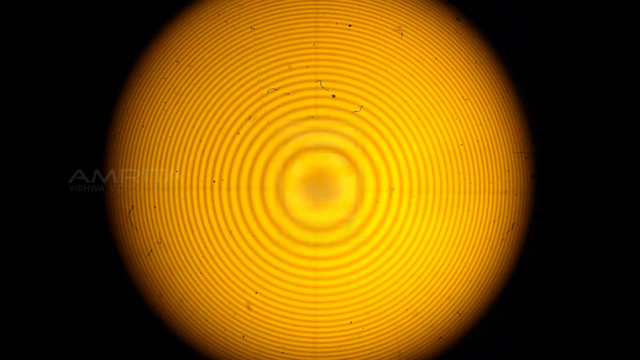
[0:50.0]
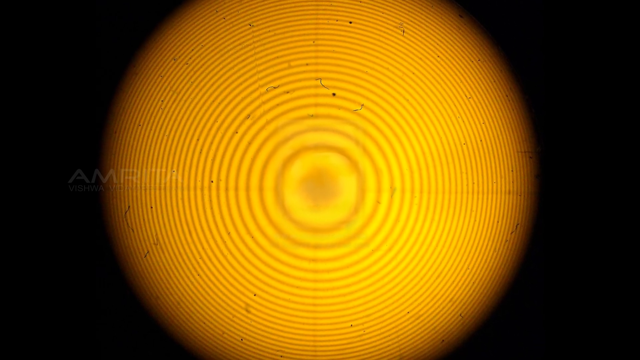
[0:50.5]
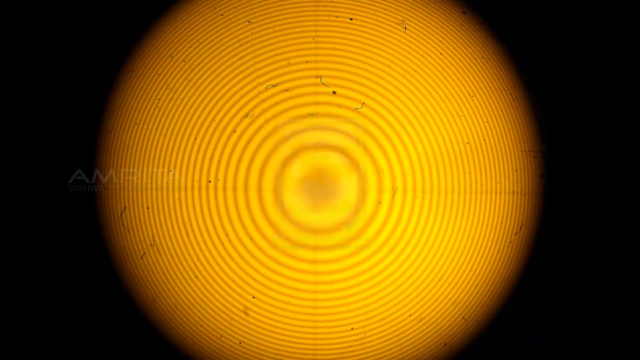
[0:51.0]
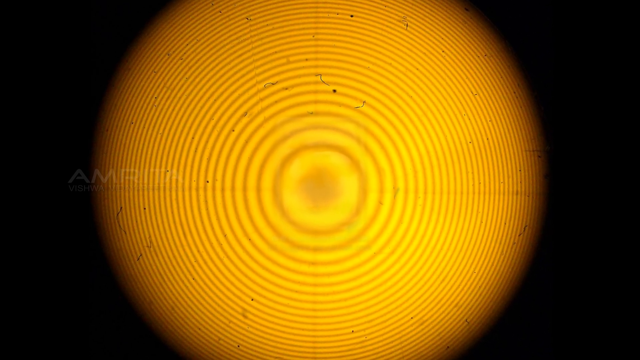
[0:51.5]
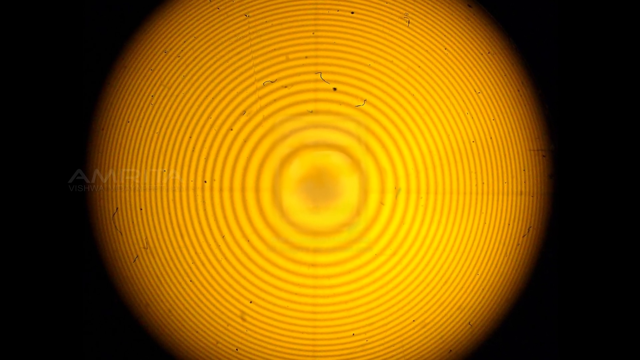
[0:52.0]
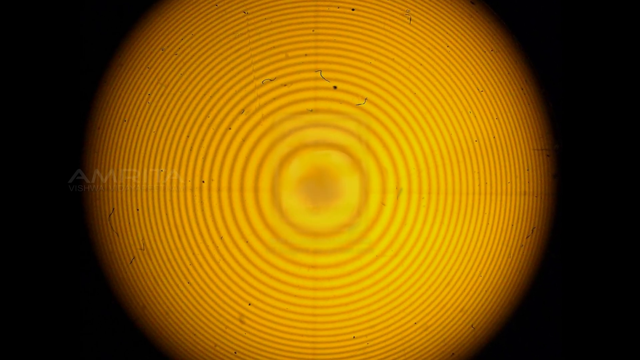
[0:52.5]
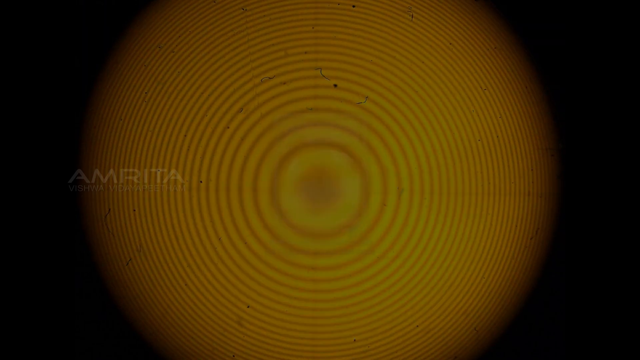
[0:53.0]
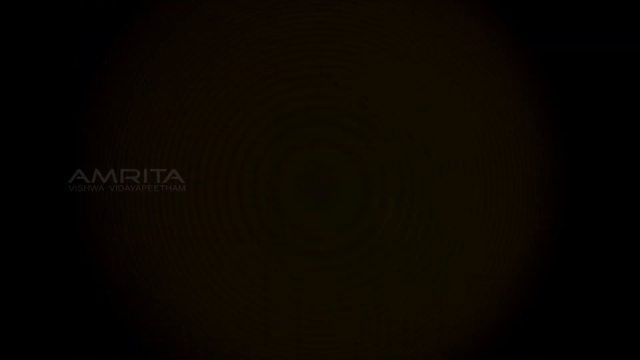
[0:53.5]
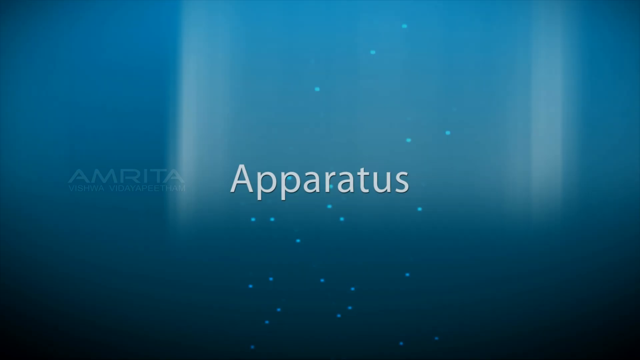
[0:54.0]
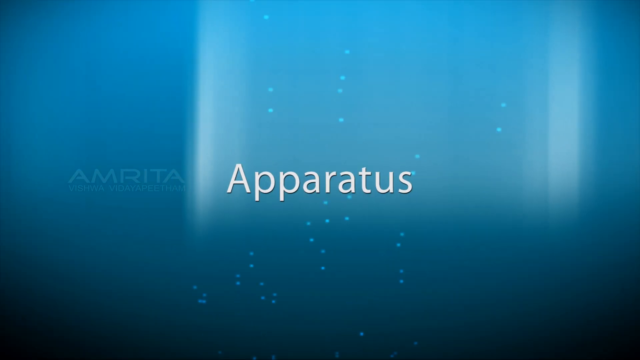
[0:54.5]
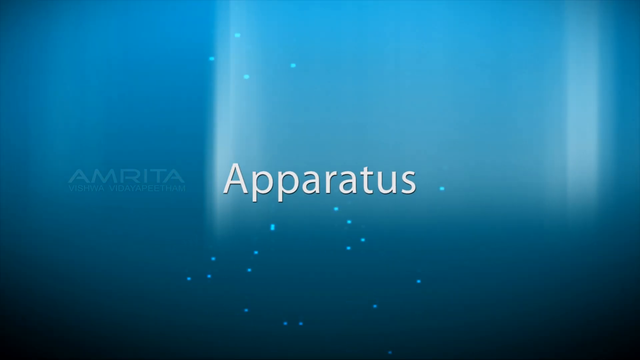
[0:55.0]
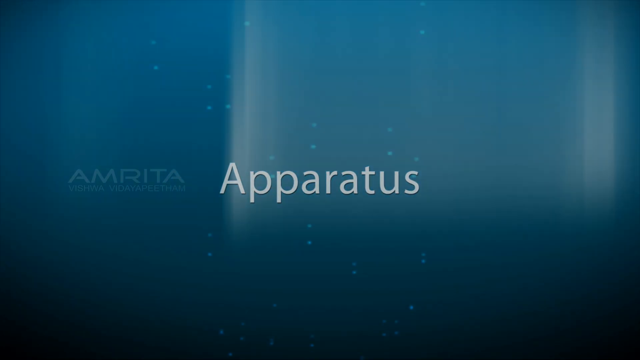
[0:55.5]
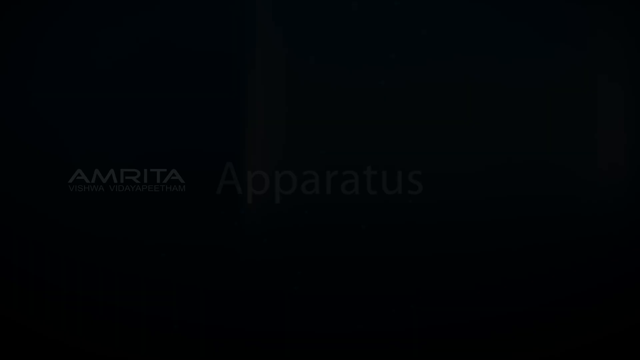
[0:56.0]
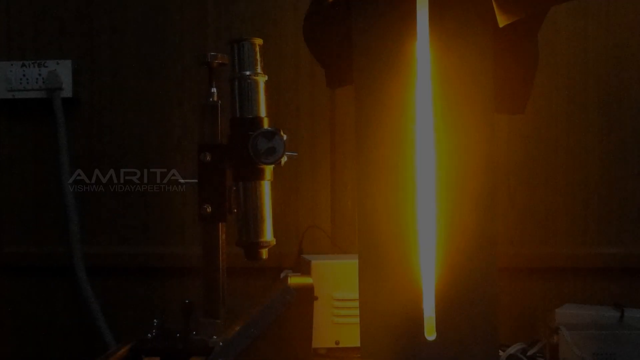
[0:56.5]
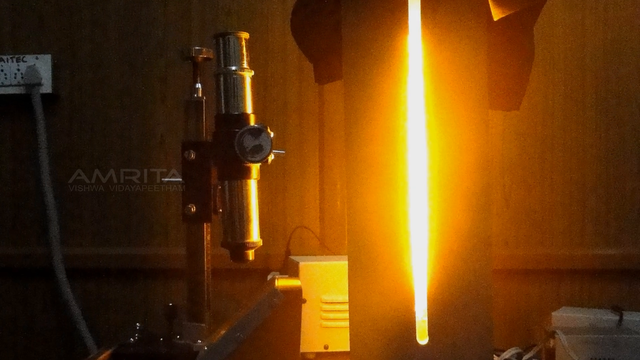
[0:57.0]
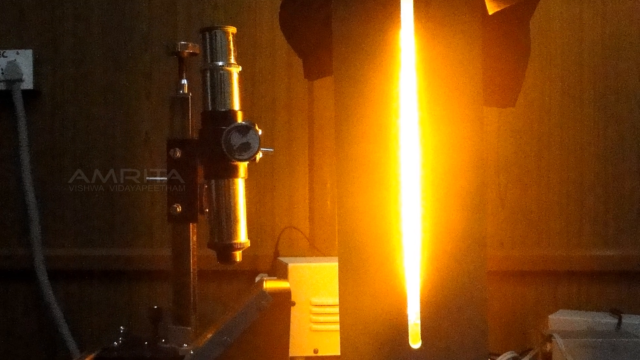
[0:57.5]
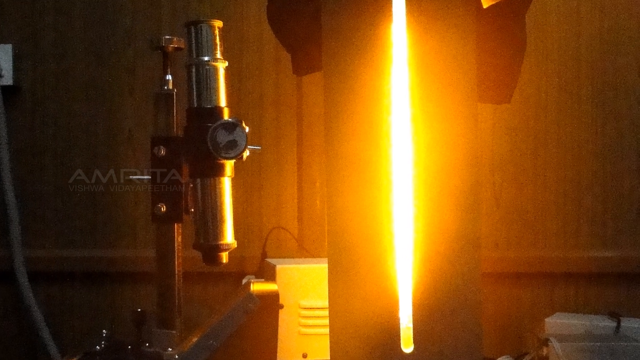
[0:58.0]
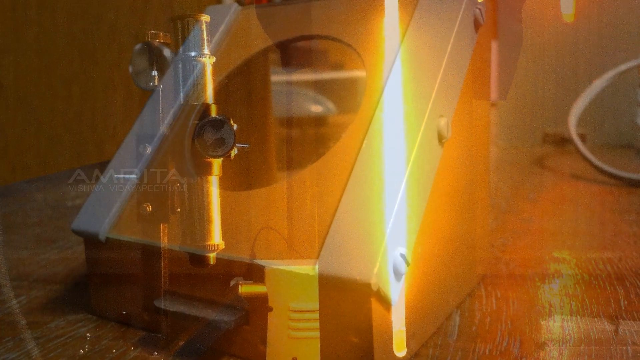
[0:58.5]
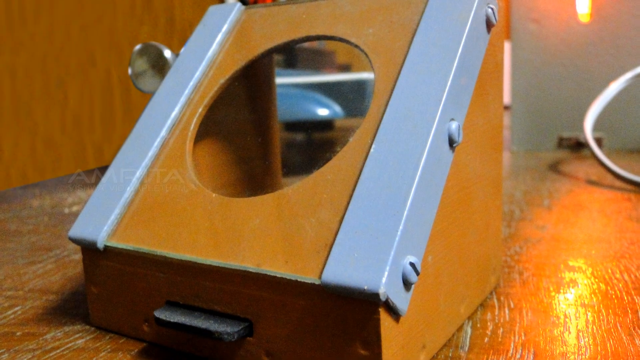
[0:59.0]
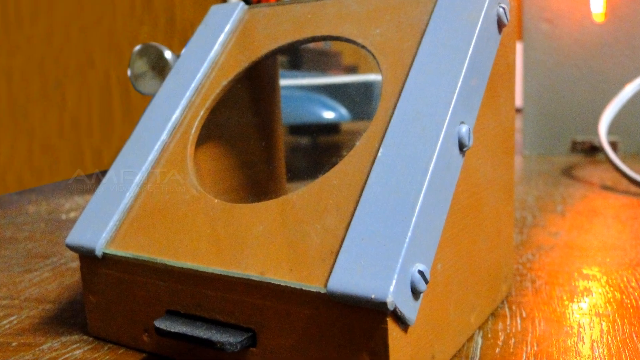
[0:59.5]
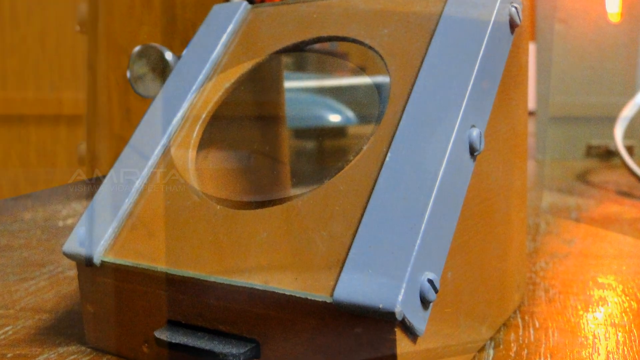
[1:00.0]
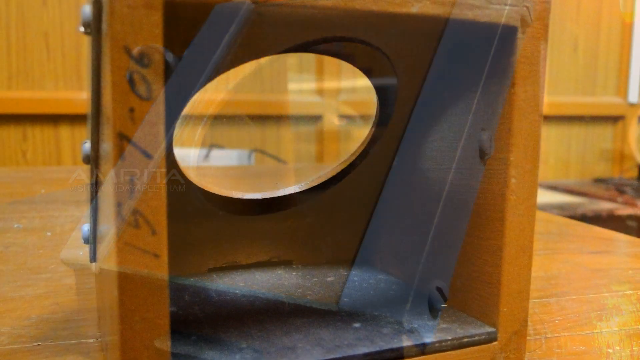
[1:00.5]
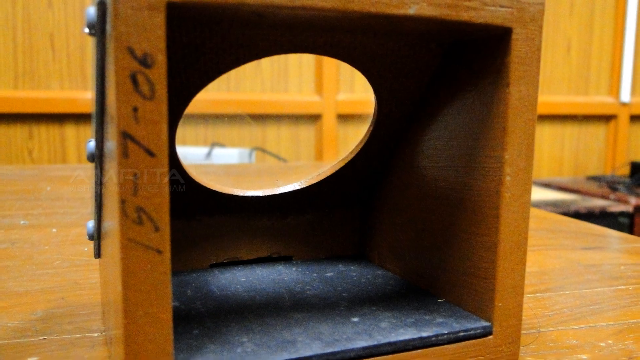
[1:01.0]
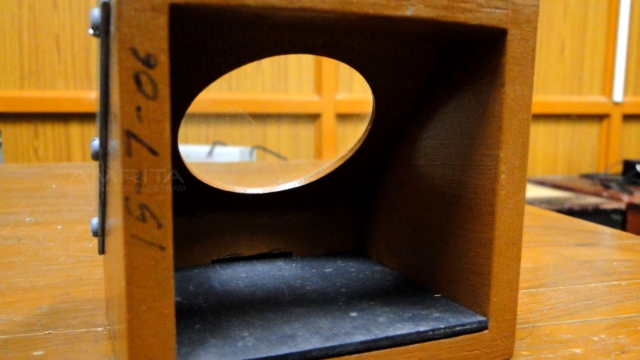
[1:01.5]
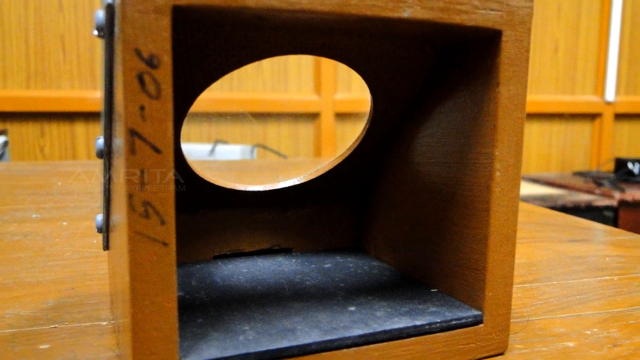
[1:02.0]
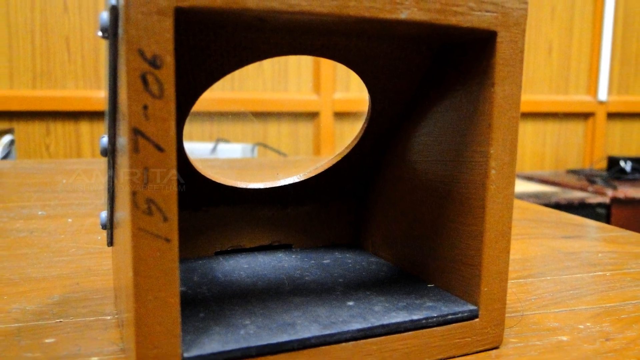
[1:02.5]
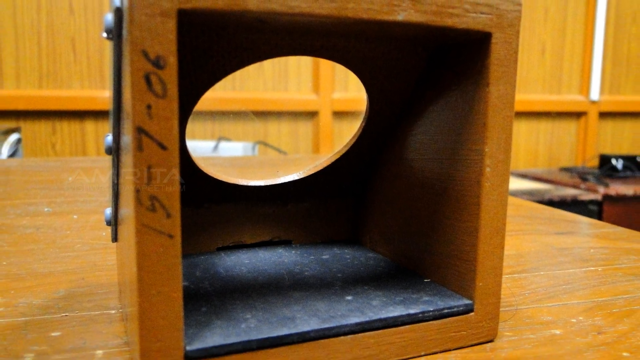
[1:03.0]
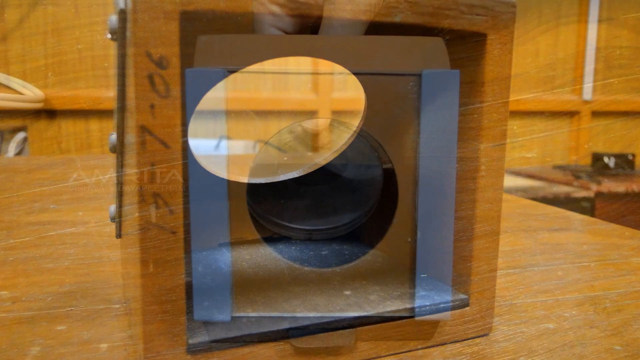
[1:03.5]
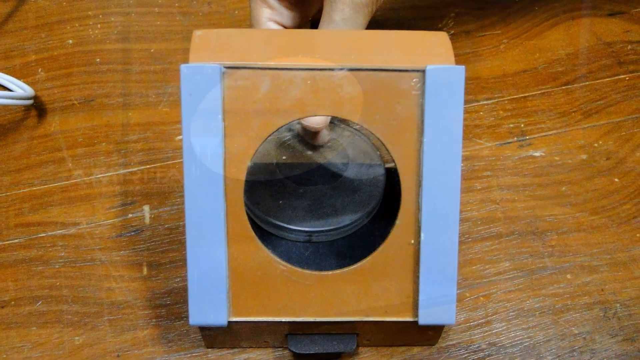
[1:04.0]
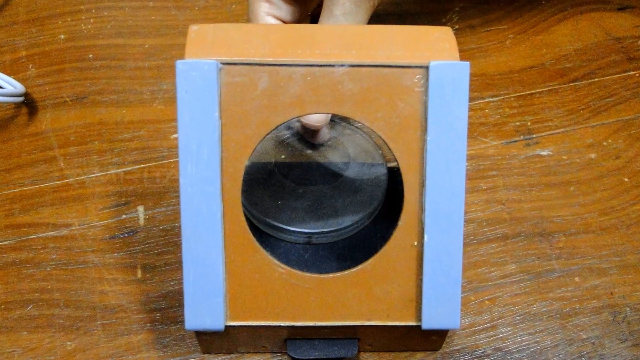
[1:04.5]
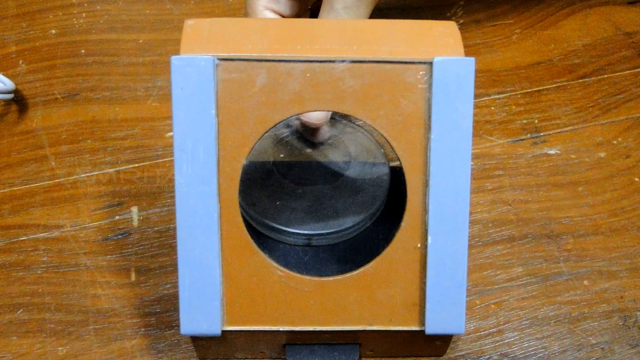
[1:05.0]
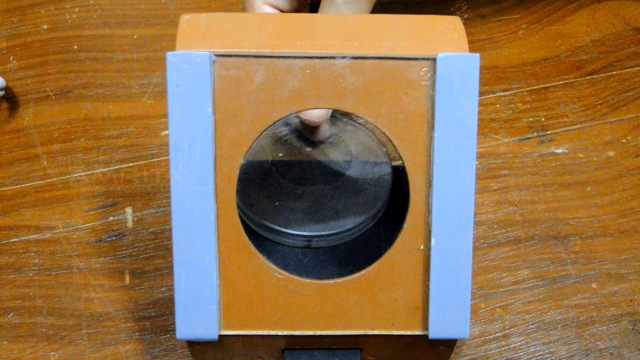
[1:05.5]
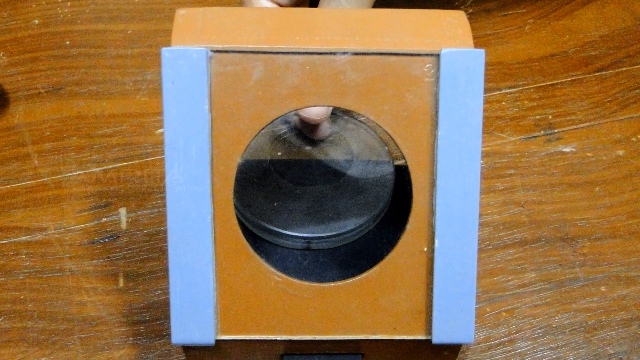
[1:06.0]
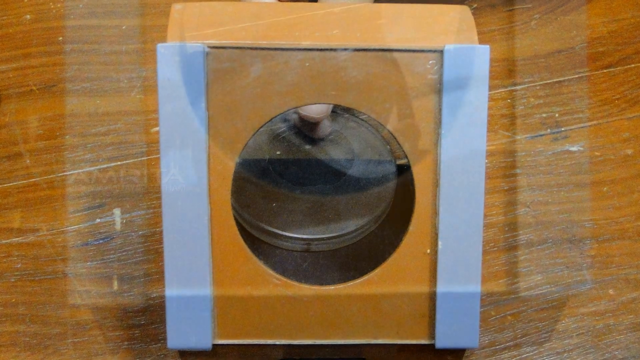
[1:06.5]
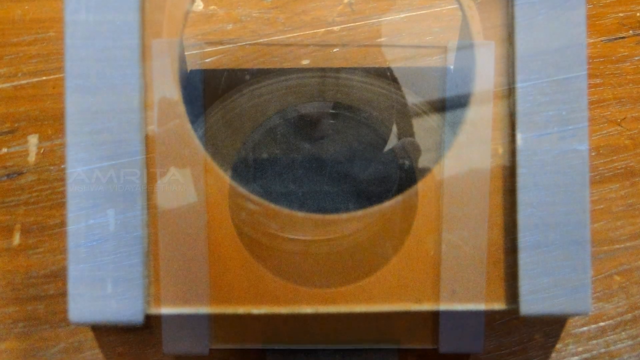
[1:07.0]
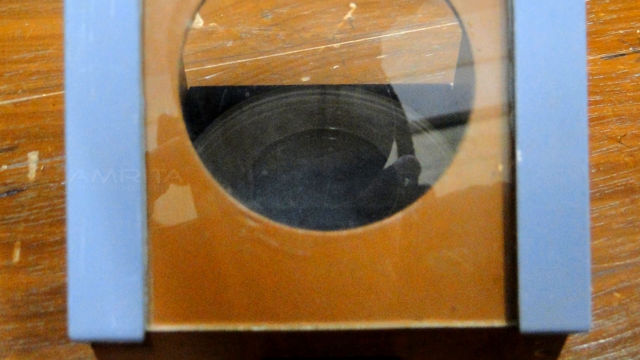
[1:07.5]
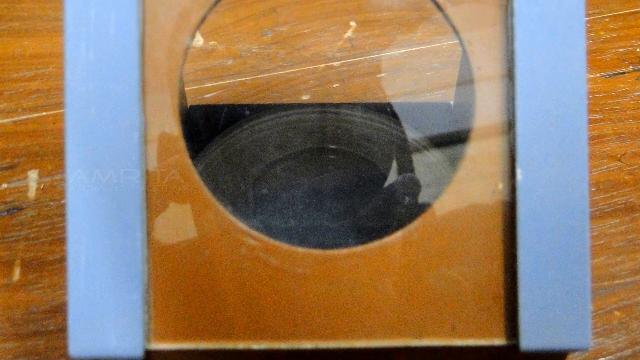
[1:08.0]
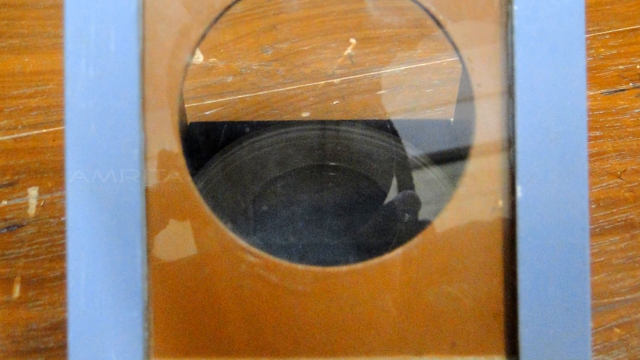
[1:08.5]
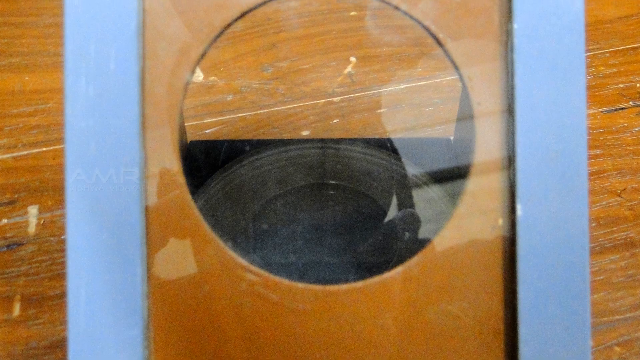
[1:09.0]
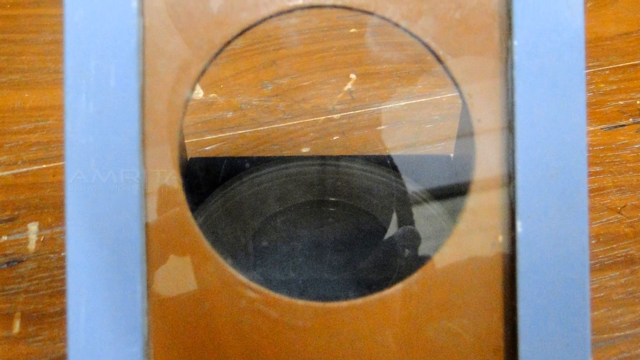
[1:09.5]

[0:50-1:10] A yellow circular image, apparently computer-generated, appears on a black background. The video lingers on it as it seems to pulse ever so slightly. It fades to black, followed by a blue background with "apparatus" in white font in the middle and small white bubbles rising from the lower to the upper part of the image. Next comes a still photograph of a microscope that is hard to see because it is in shadow. To its right is a curtain with a small slit through which a very bright orange and yellow light, like the sun, peers in and illuminates the microscope in an otherwise dark room. The video then moves quickly through a series of images of various objects: square wooden pieces with circular cutouts, like some kind of homemade project, in a big room that seems almost like a workshop.